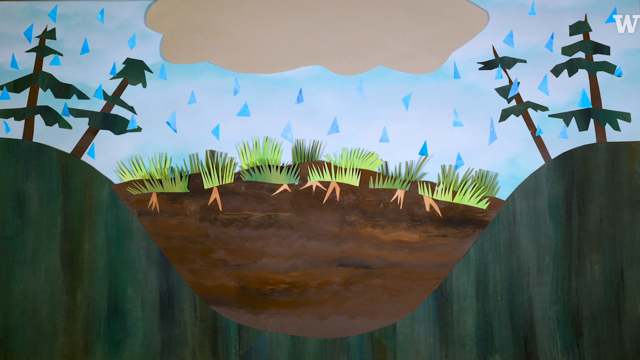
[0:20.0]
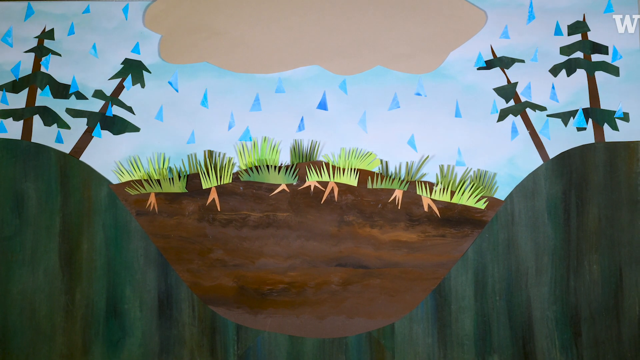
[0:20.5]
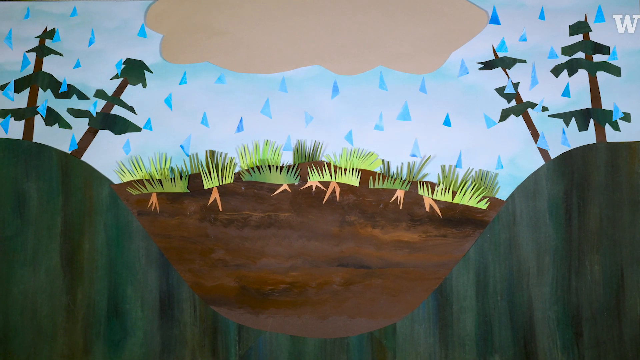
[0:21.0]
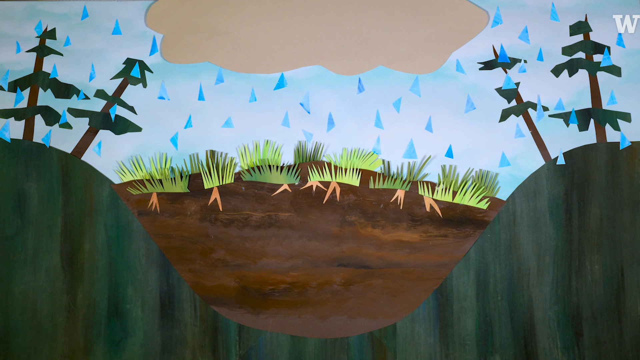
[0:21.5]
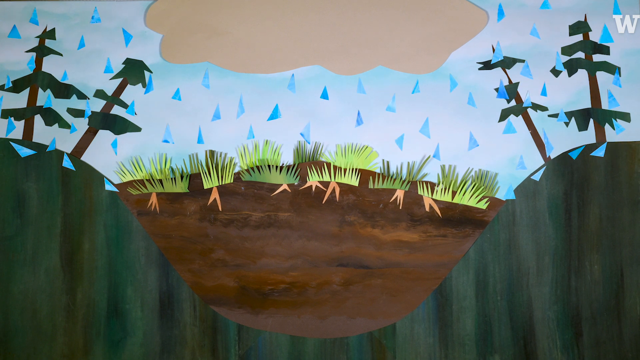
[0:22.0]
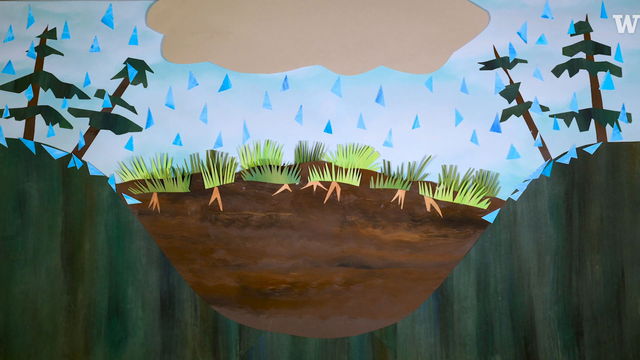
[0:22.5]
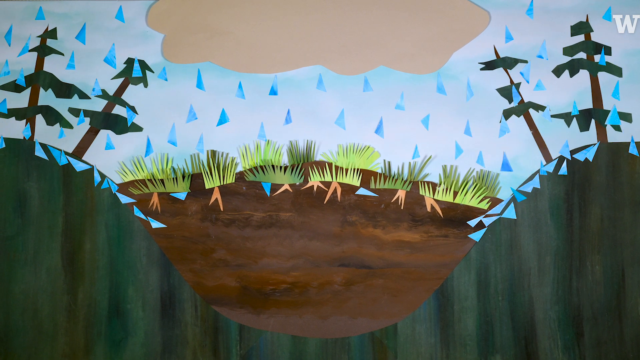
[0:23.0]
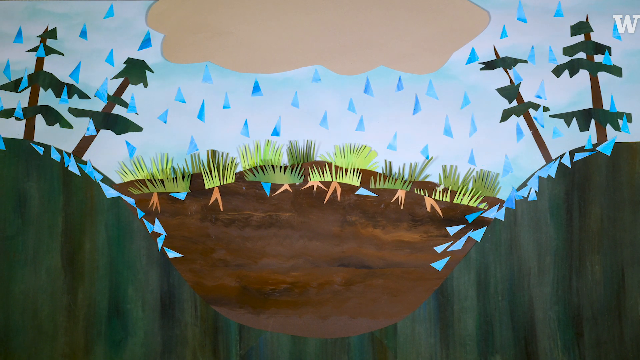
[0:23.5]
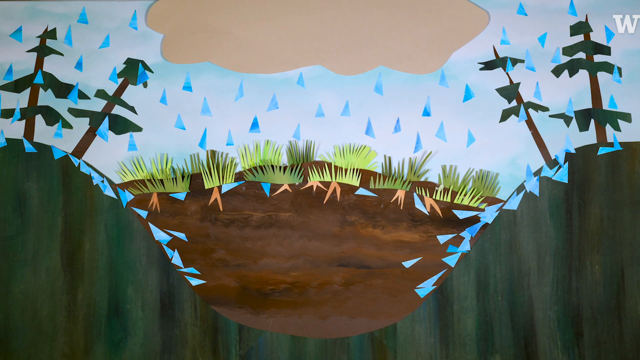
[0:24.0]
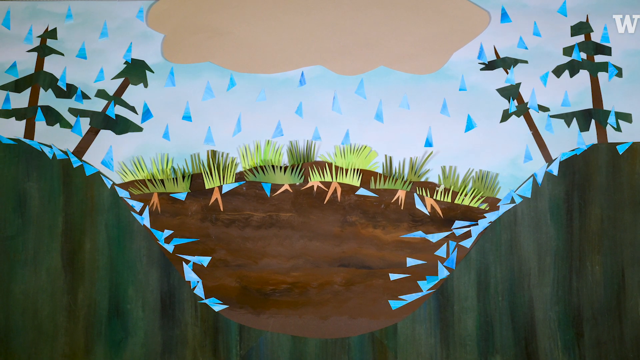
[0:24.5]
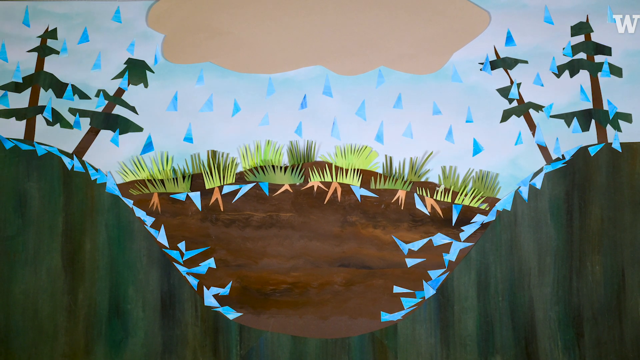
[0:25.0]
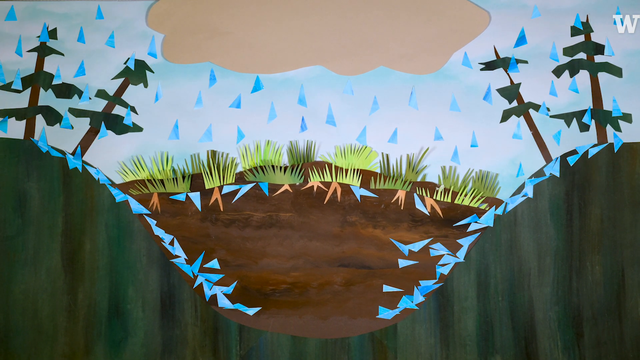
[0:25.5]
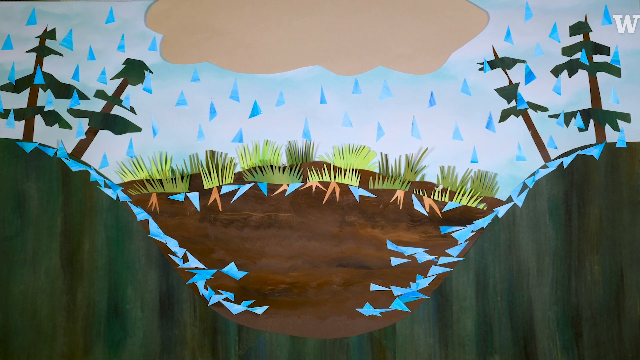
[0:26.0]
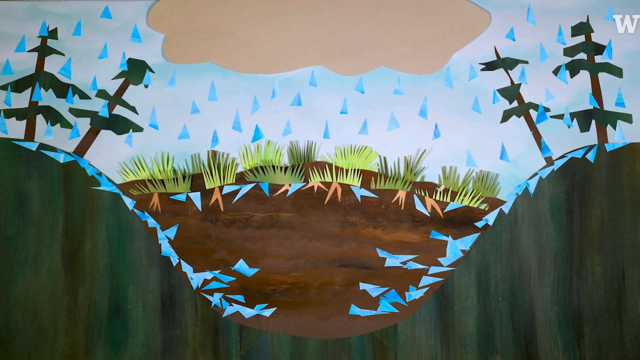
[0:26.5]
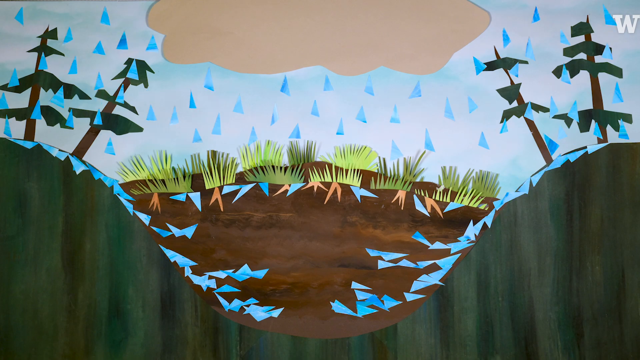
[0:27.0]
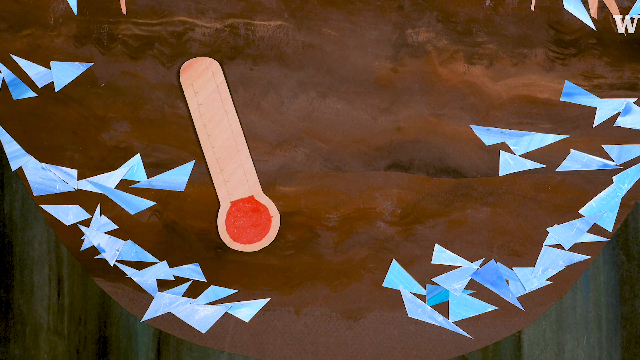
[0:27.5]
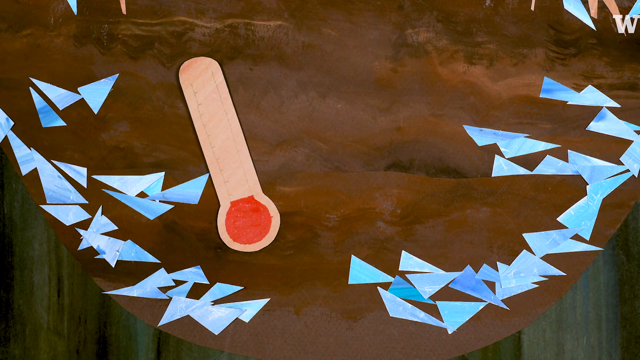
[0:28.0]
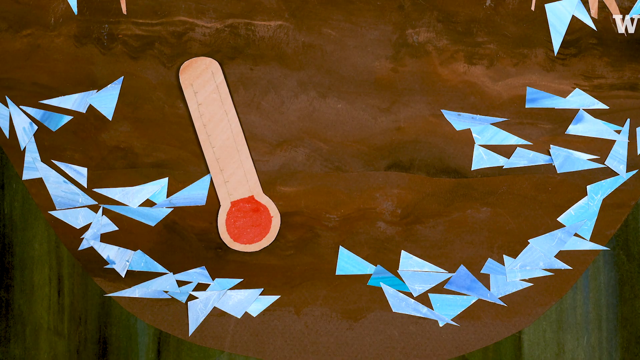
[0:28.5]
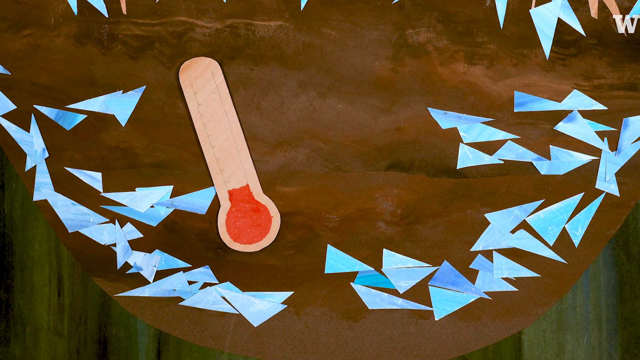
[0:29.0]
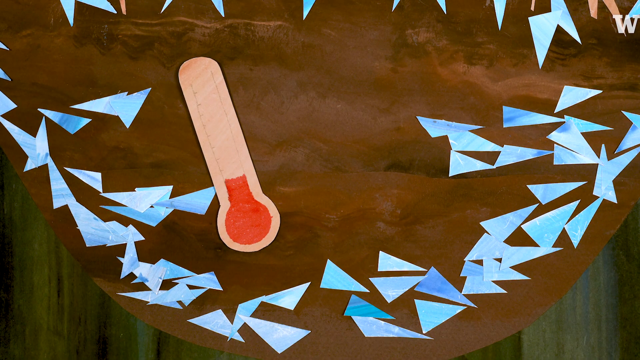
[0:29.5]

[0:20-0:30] An illustration shows plants and clouds that bring rain. Rain falls on the ground, including on the highest ground, while green crops grow on the lowest part of the ground. After the rain, water flows toward the lower end of the land and collects on the lowest part of the ground, in a hole at the lowest point. An illustrated thermometer shows a rising temperature. The animation apparently focuses on the effects of rain on the environment.